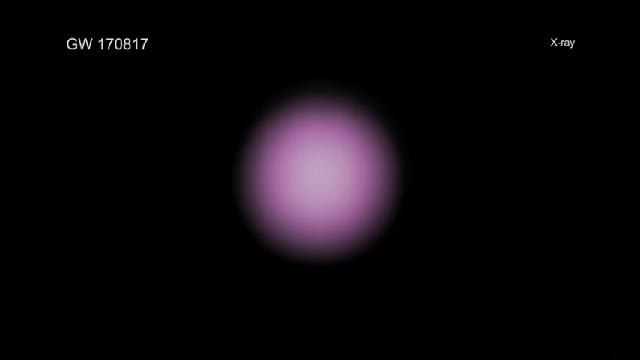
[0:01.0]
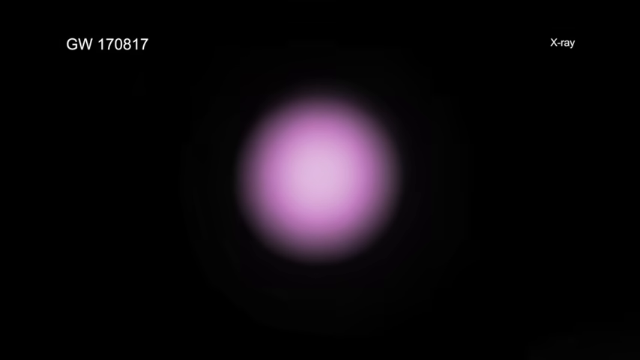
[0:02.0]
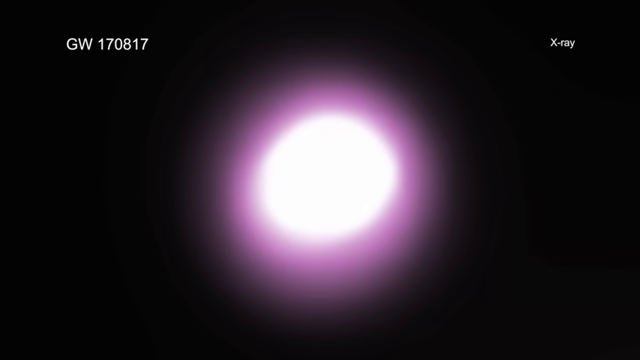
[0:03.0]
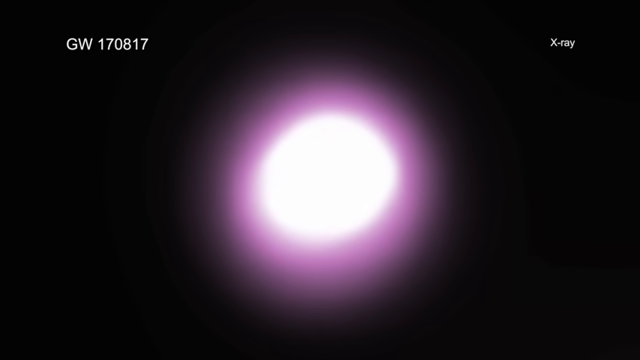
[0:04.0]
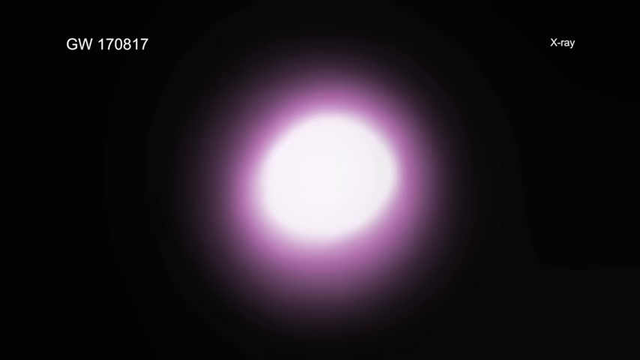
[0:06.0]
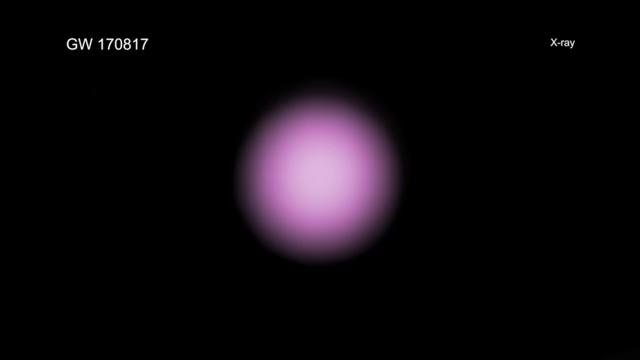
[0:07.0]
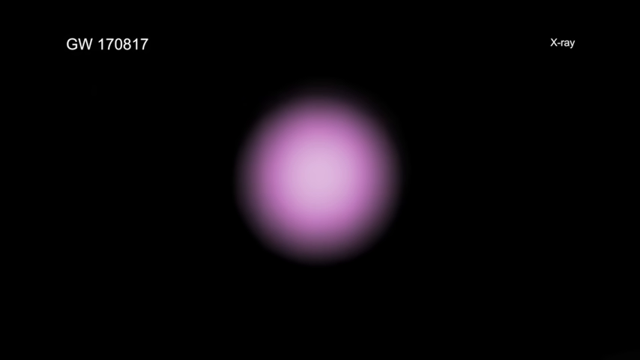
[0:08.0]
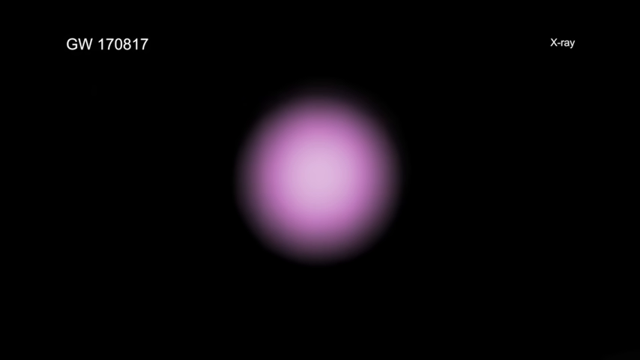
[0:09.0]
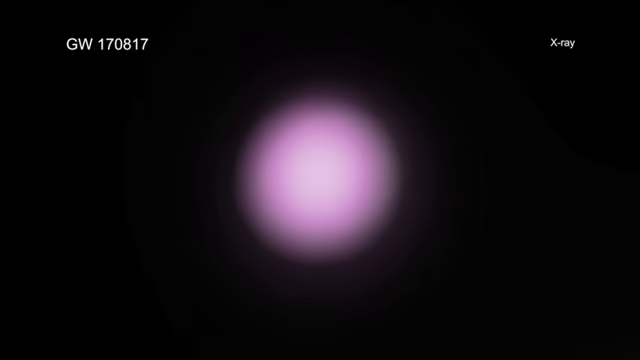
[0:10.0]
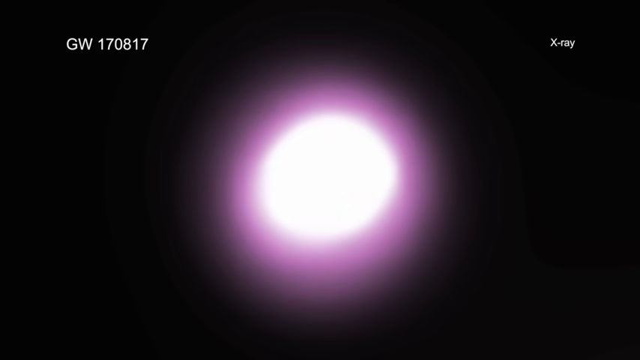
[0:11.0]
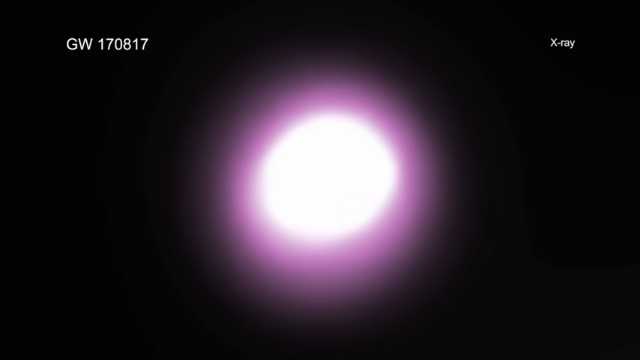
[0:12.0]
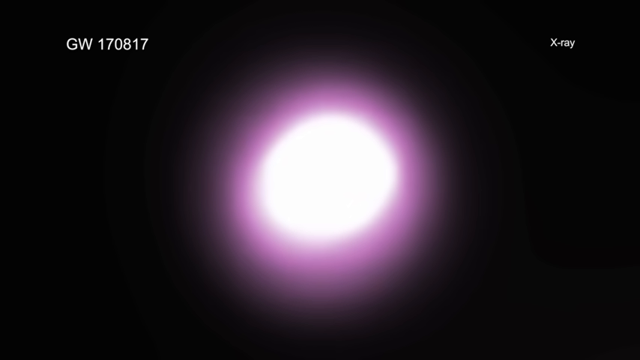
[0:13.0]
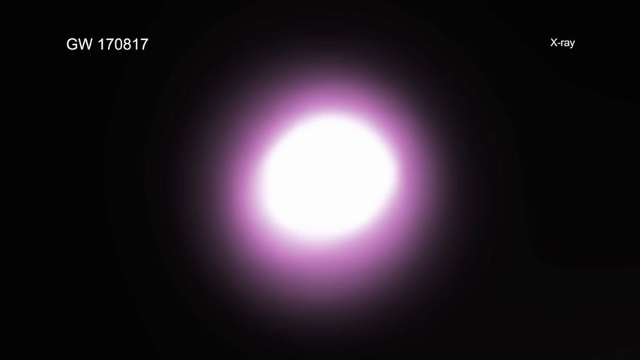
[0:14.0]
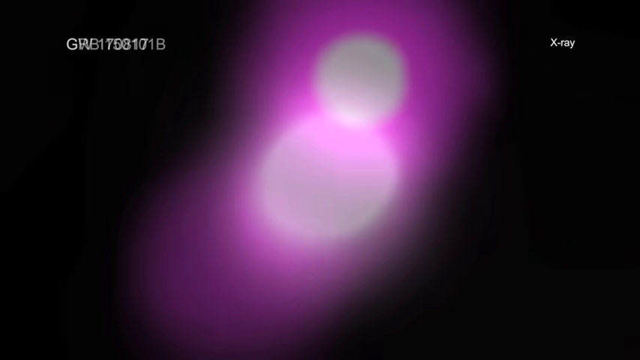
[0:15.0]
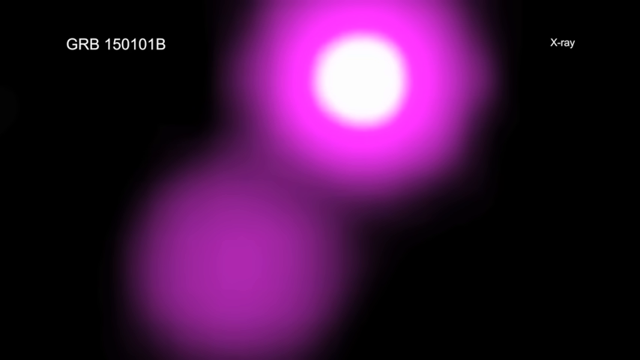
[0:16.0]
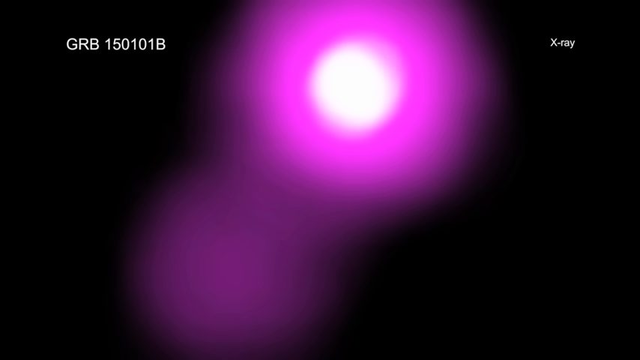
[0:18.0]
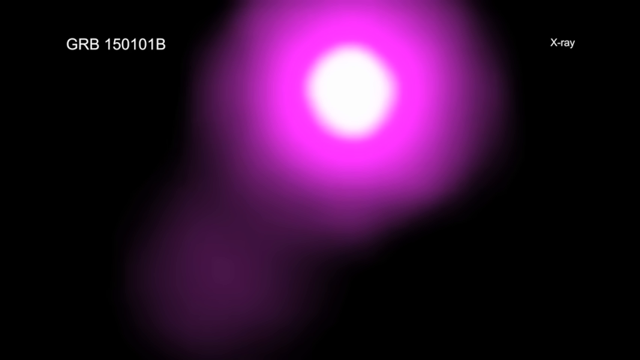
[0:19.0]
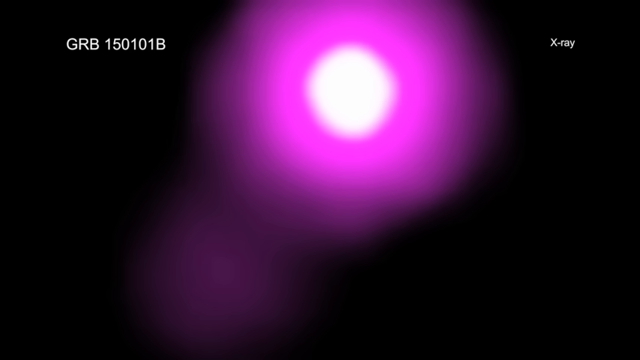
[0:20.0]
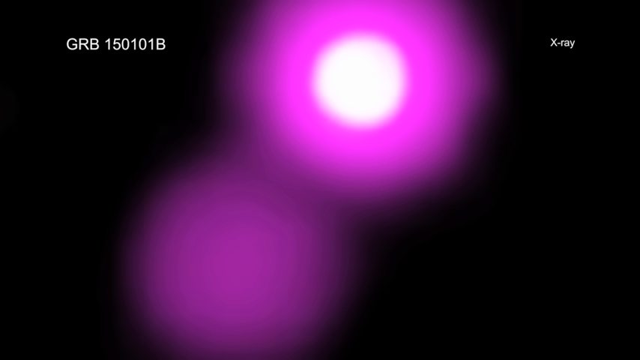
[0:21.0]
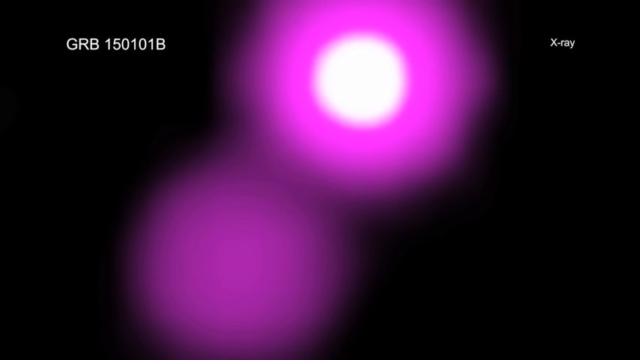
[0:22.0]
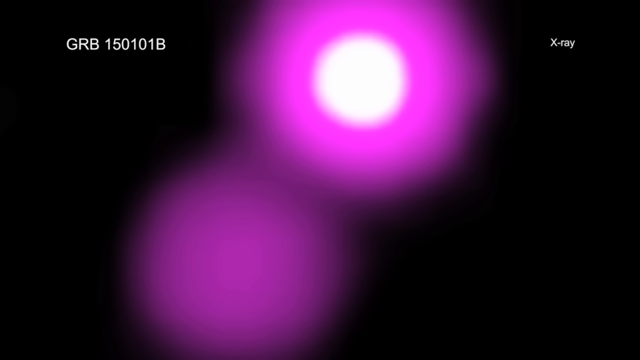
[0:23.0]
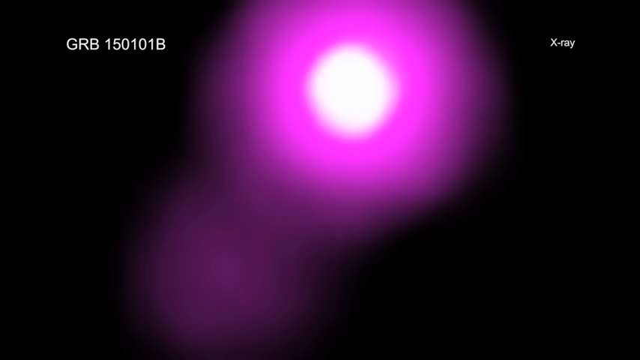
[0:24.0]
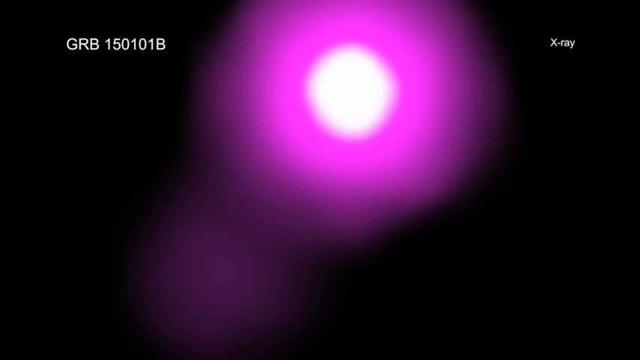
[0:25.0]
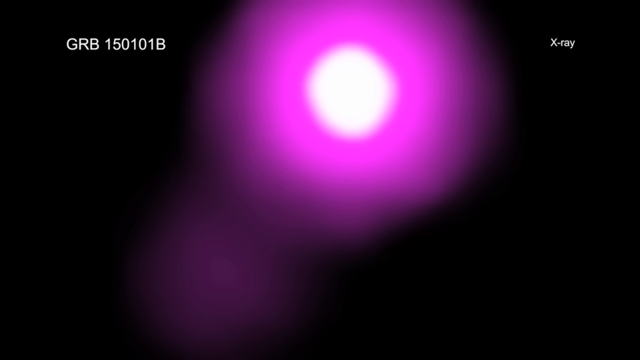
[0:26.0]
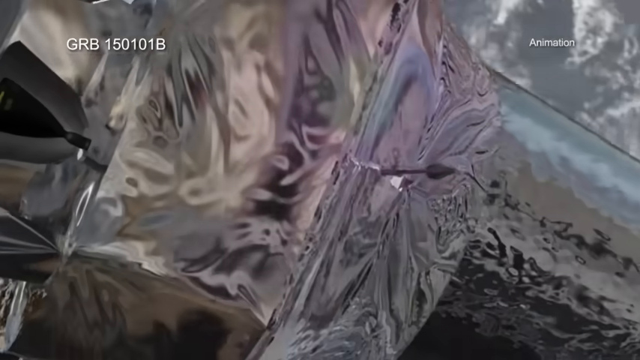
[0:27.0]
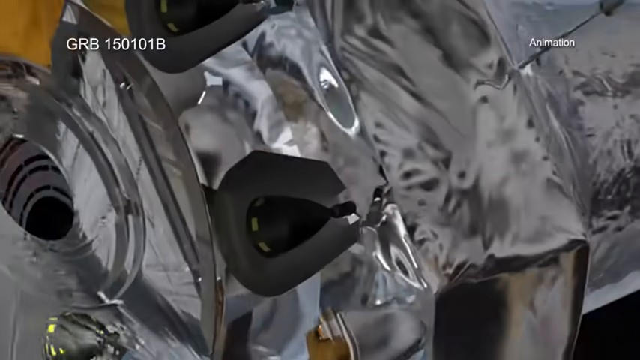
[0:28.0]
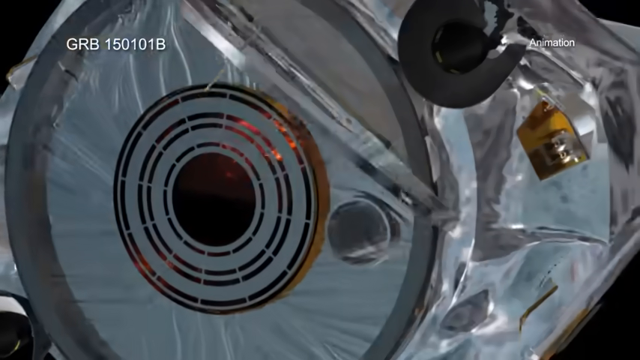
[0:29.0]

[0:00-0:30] An animated purple sphere appears in the middle of a completely black screen; its center is very bright and white, and it has an outer ring of pink. Nothing else is visible. The sphere then alters in shape, with the more structured object moving to the top portion of the screen and another edge of brightness forming toward the bottom left. The scene transitions to a very close-up animated view of a metallic object, so its entirety cannot be seen. The visible part is made of shiny silvery metal and has thrusters at the back. The background is only deep black, with no other objects in view.